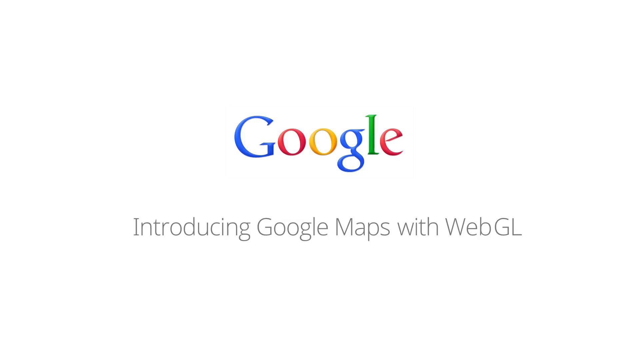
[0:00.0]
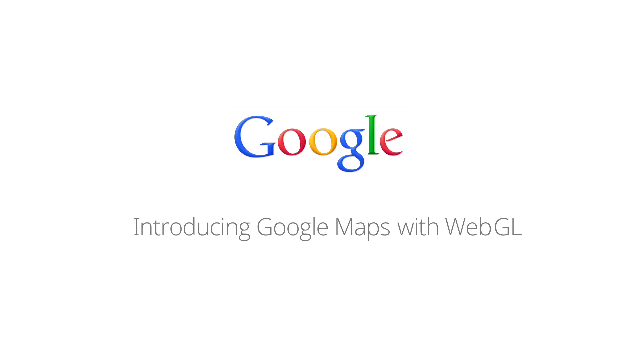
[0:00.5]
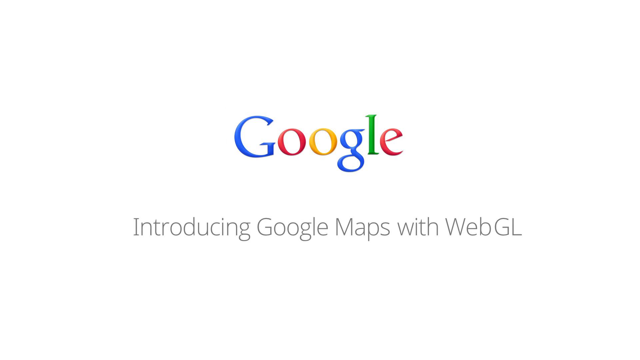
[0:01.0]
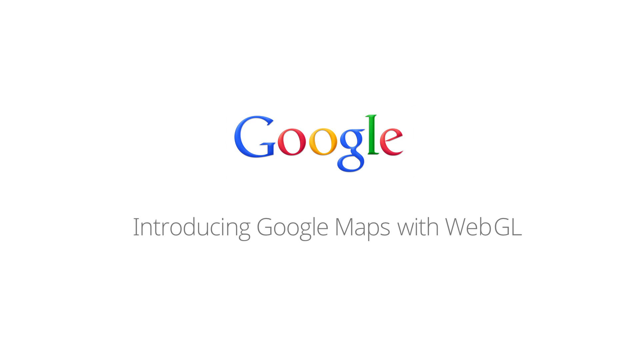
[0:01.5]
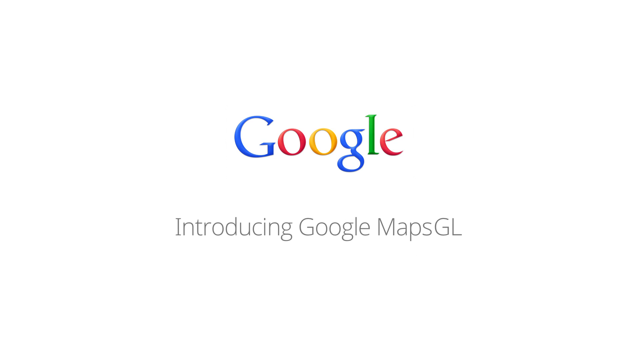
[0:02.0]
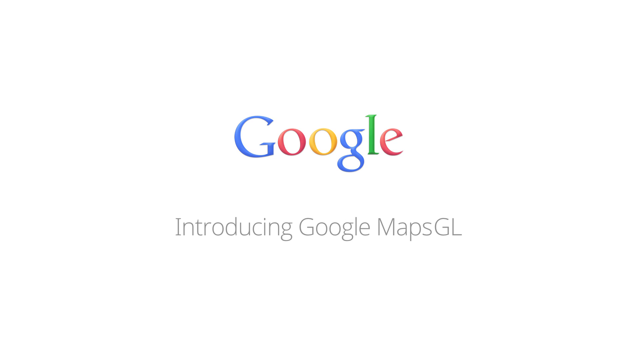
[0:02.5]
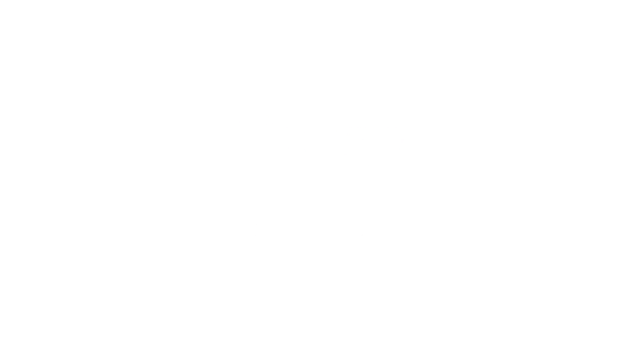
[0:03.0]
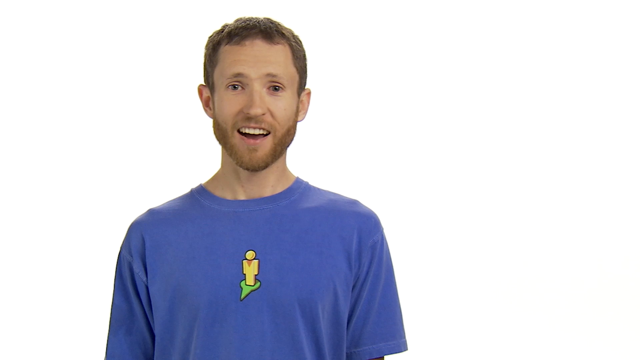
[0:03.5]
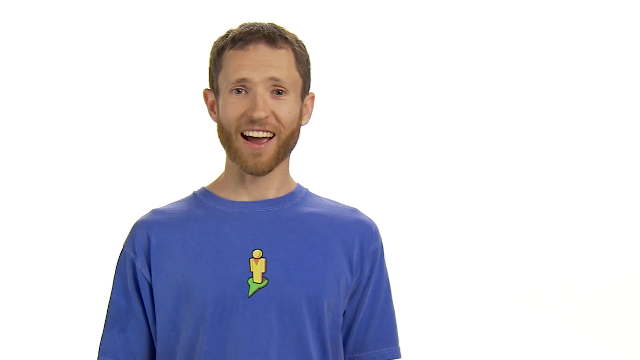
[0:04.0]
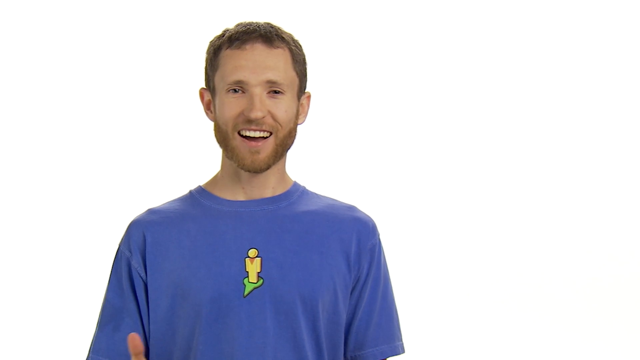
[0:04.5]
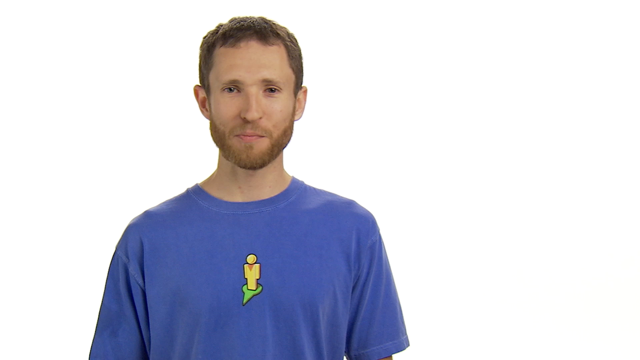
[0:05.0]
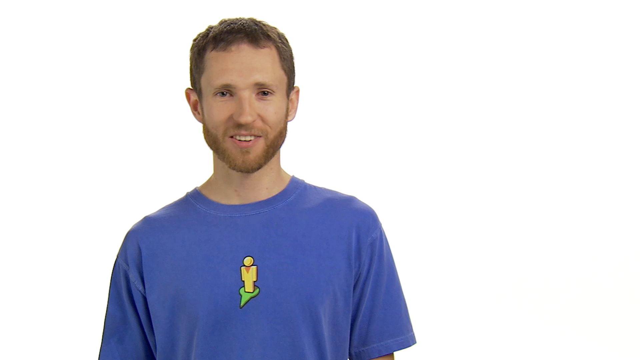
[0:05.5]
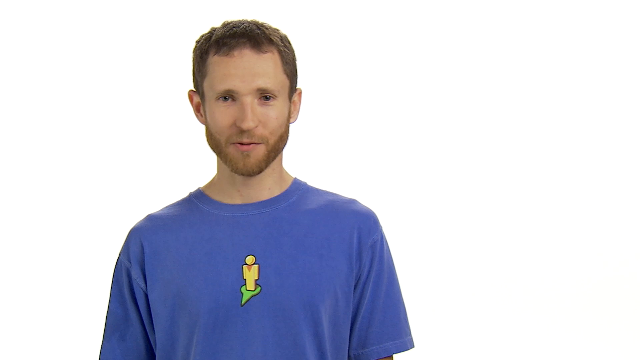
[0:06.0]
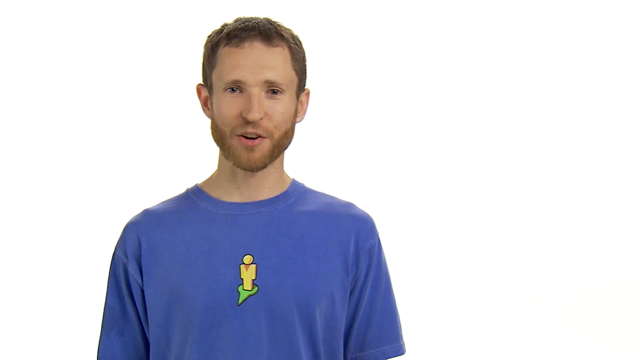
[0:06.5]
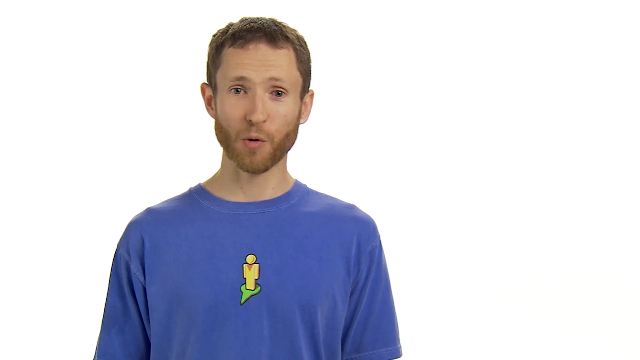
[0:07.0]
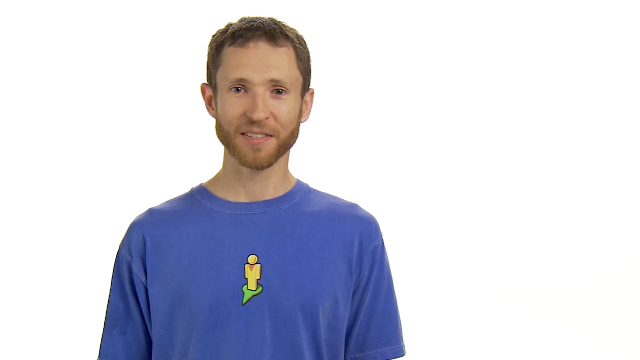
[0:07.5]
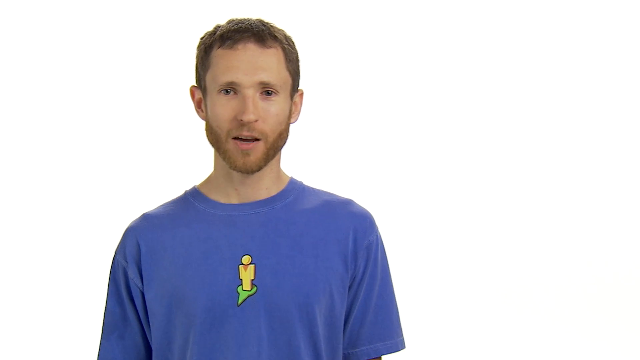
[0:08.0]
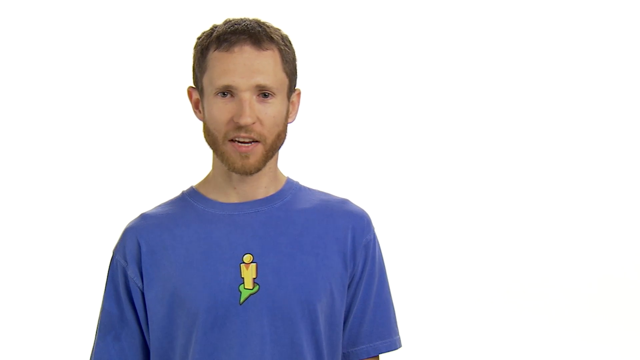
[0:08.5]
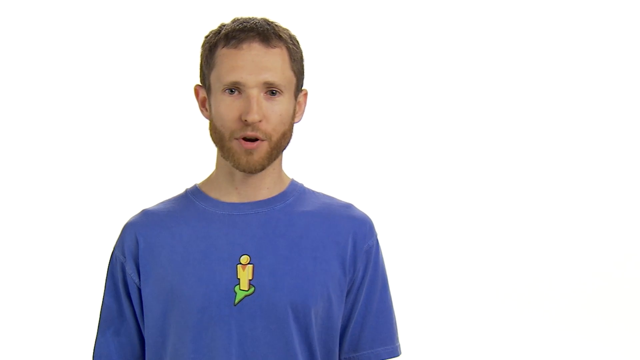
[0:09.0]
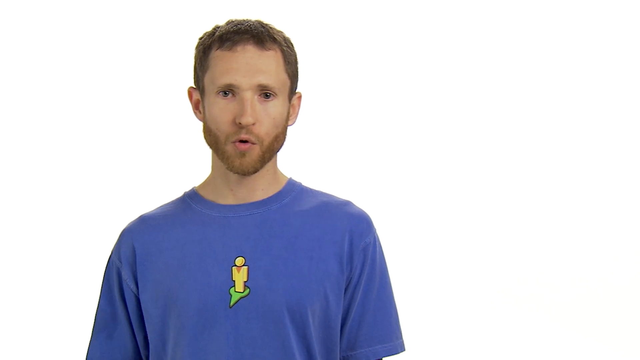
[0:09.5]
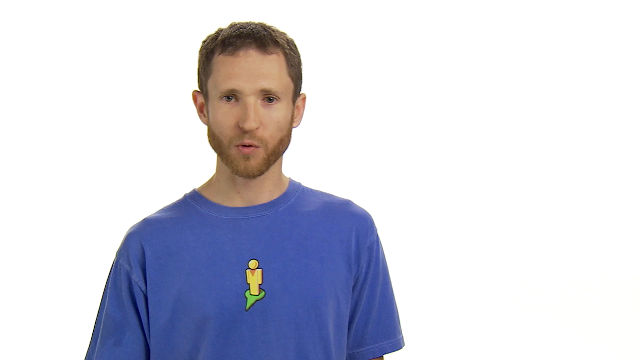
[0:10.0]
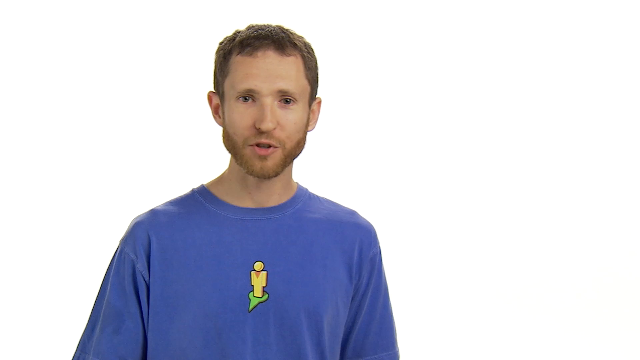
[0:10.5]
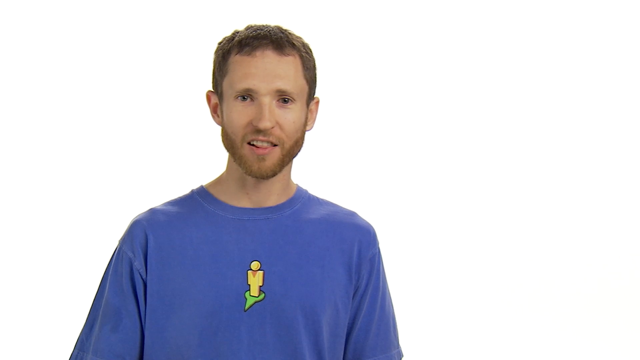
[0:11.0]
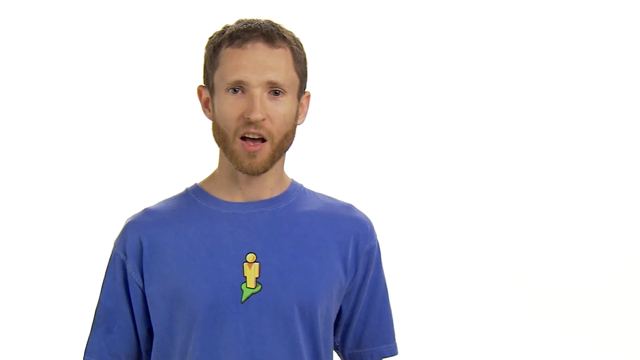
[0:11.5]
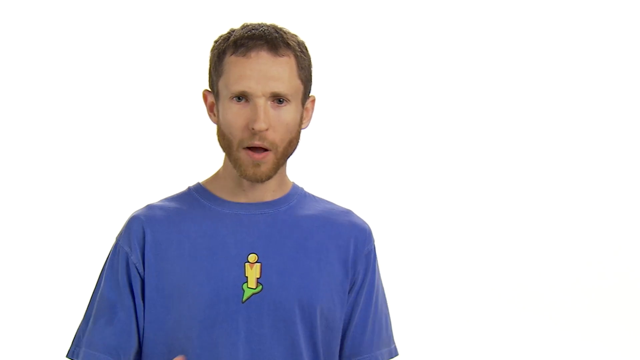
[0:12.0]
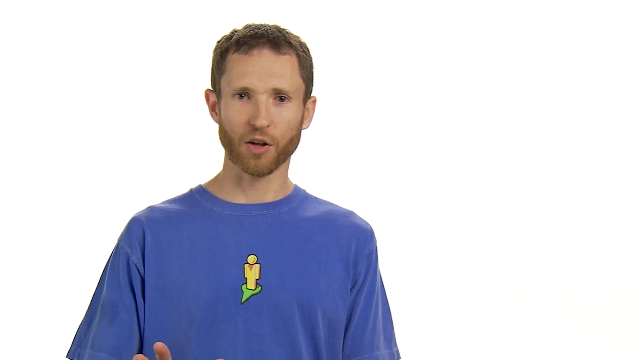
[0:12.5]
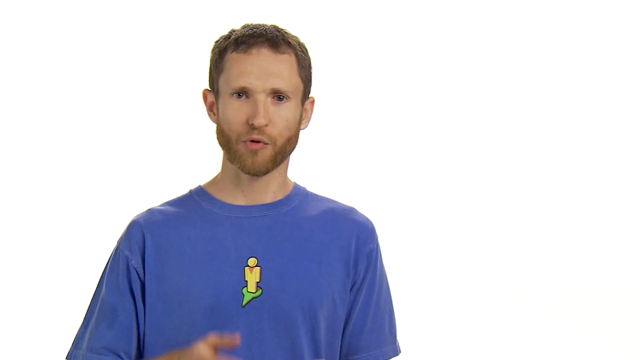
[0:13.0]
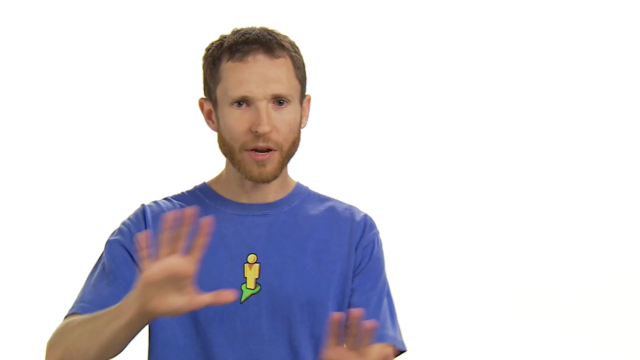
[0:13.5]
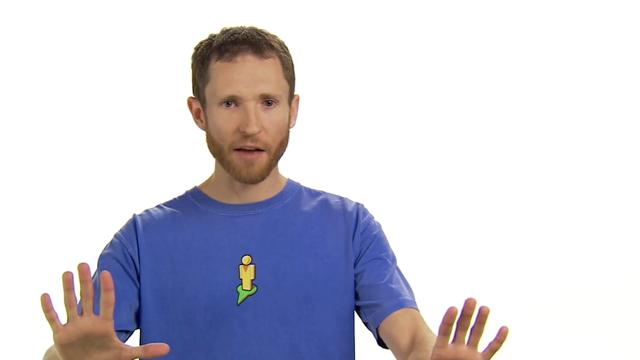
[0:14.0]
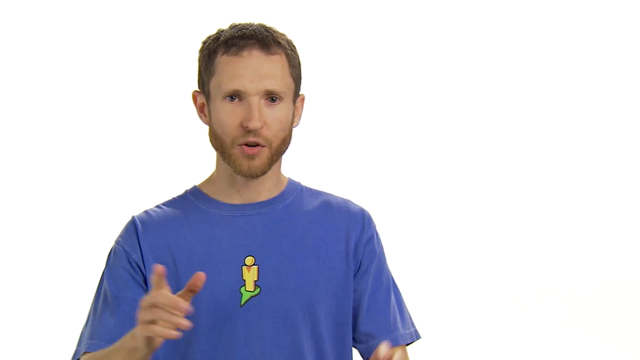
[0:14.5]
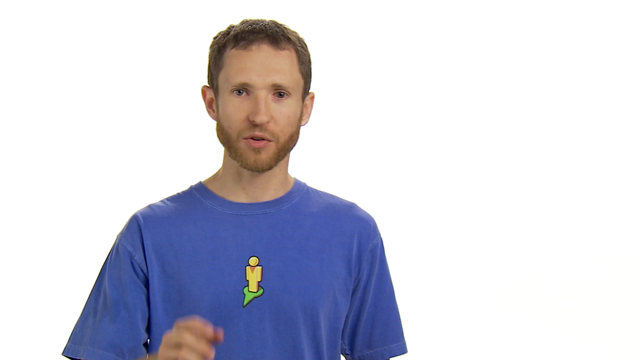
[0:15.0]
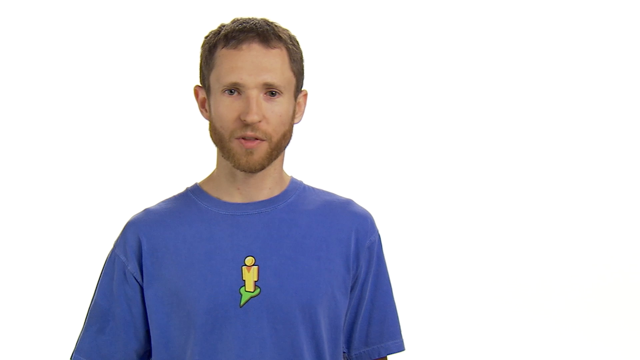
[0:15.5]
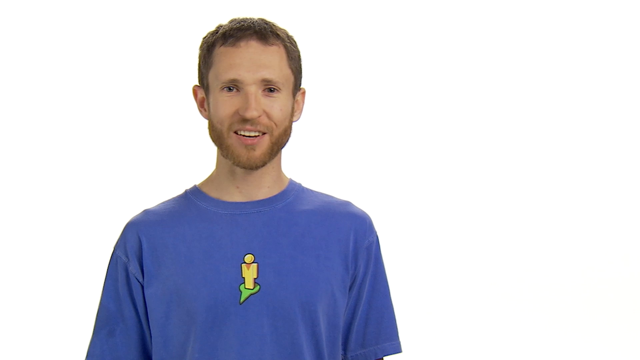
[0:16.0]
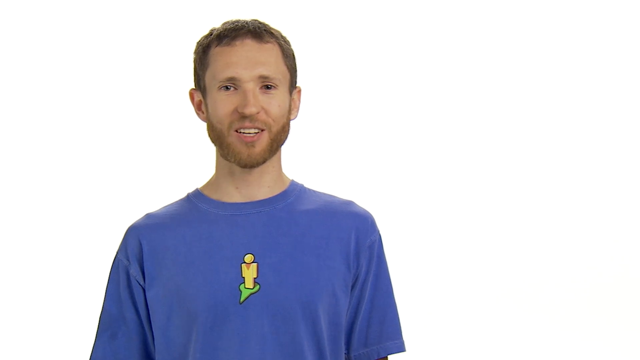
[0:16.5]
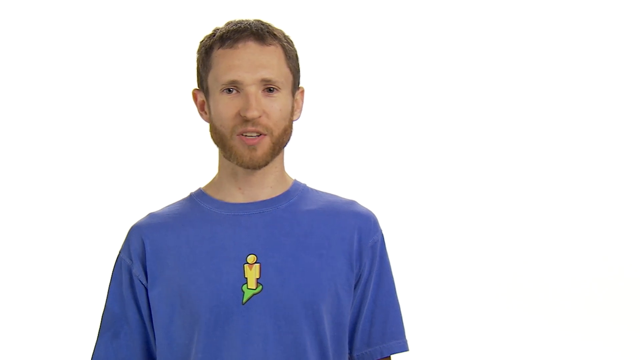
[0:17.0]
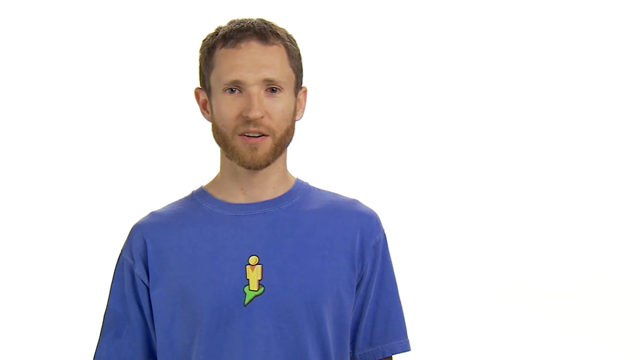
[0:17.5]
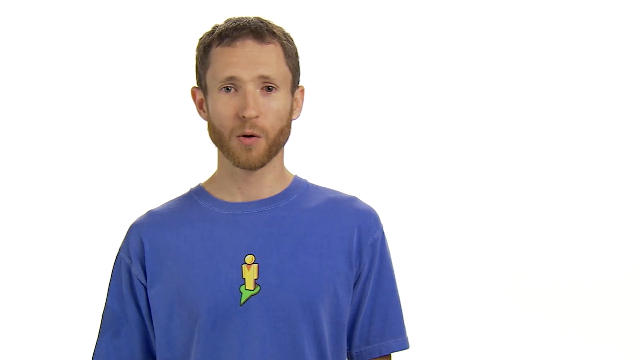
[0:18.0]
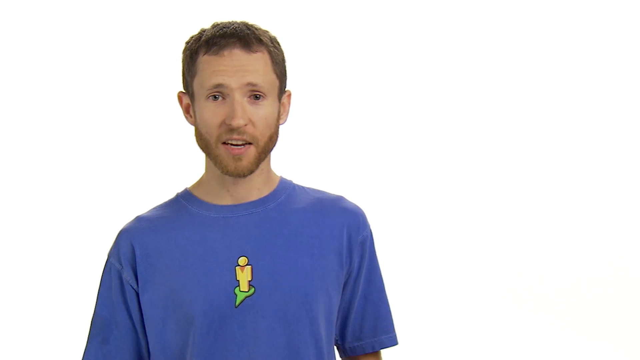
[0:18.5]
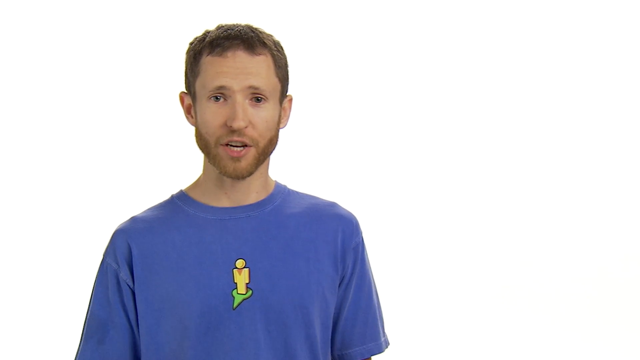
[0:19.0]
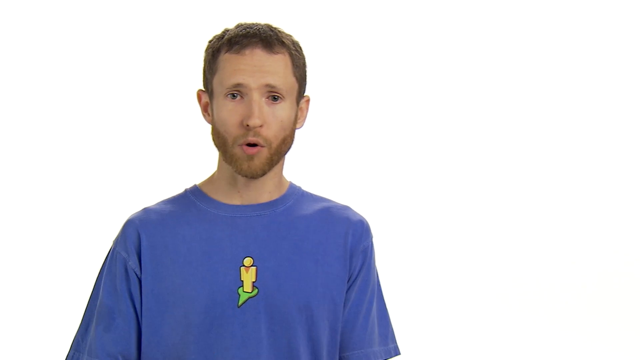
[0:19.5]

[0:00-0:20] The video opens on a slide from Google reading "introducing Google Maps with WebGL," which then transitions to "introducing Google Maps GL." It then pans to a video of a man talking. He wears a blue t-shirt with a little yellow person above a green locator icon, apparently a Google Maps icon. He has short brown hair and a short, stubby beard, and he talks and smiles to the camera, gesturing with his hands as he speaks.